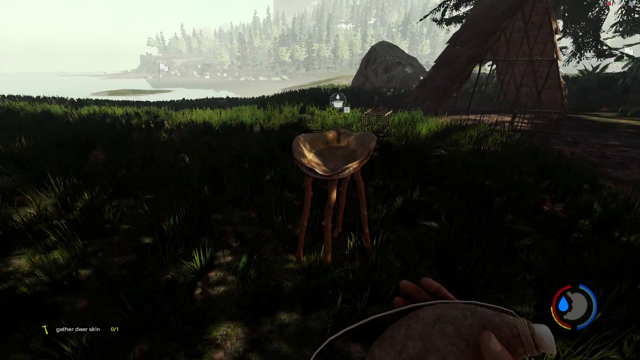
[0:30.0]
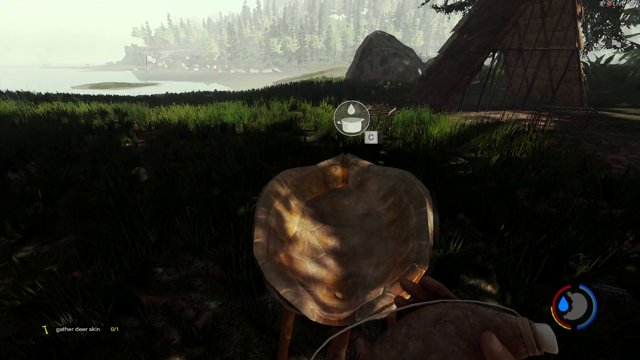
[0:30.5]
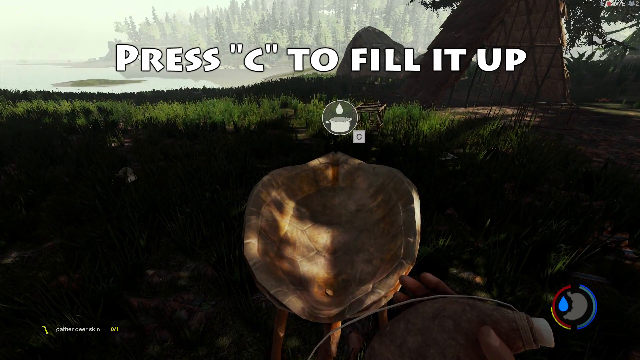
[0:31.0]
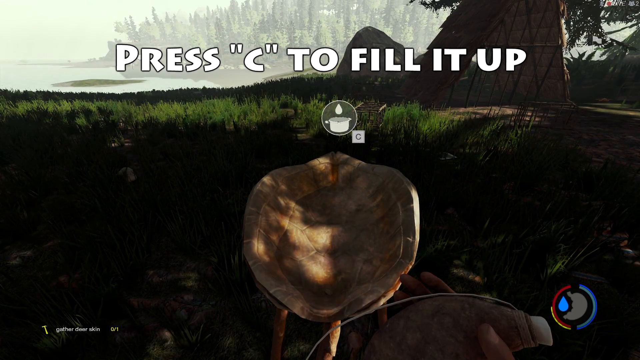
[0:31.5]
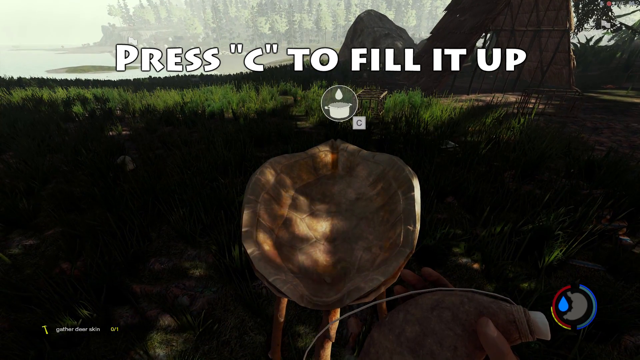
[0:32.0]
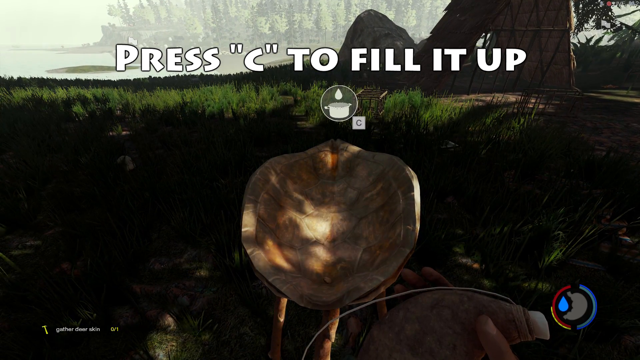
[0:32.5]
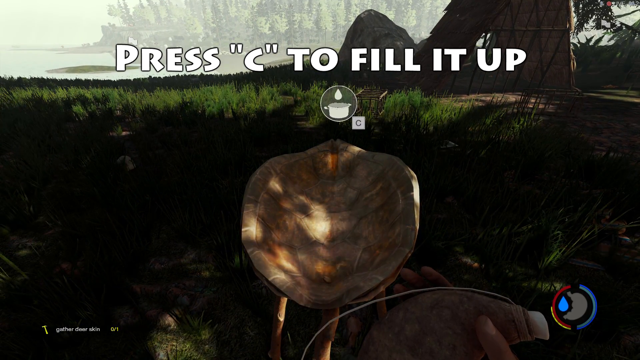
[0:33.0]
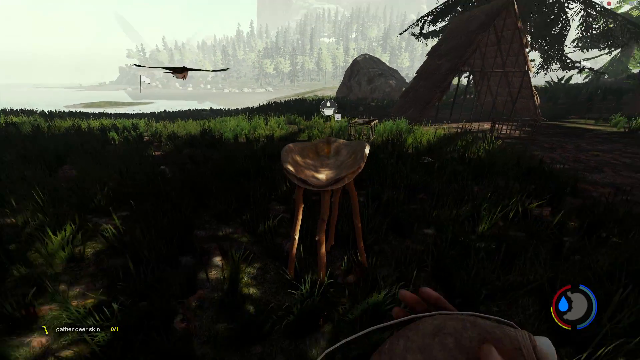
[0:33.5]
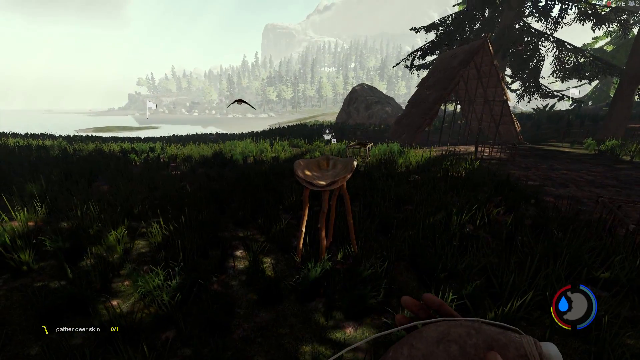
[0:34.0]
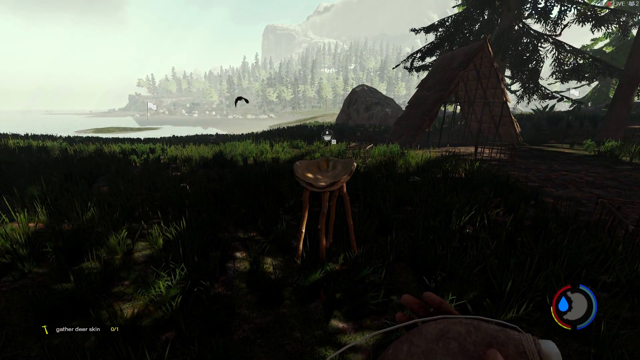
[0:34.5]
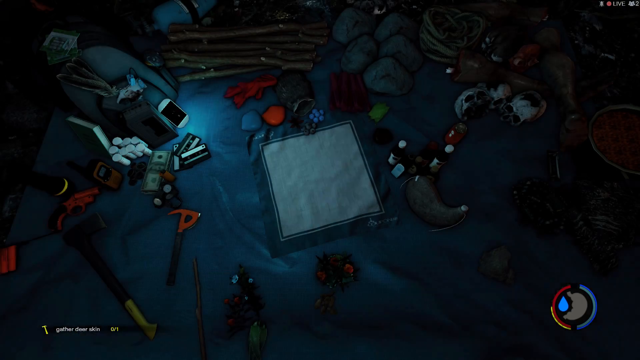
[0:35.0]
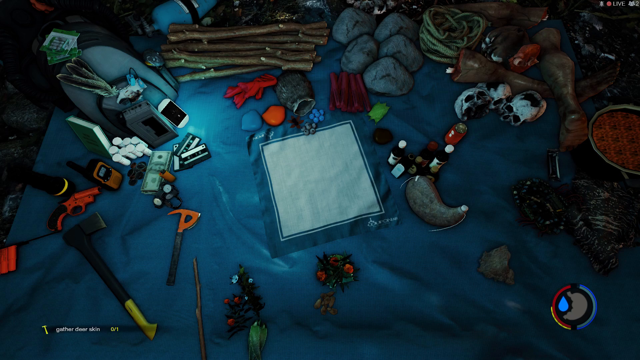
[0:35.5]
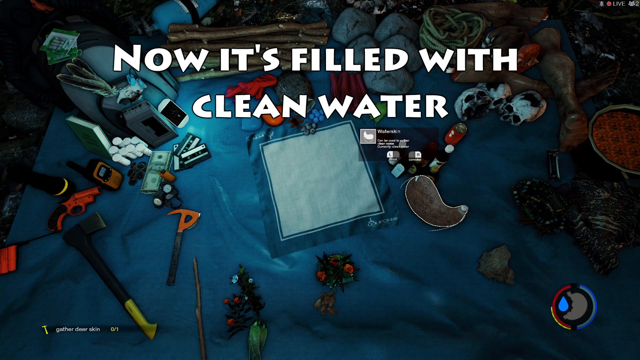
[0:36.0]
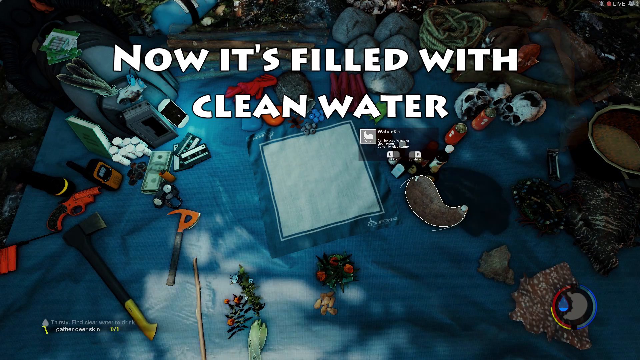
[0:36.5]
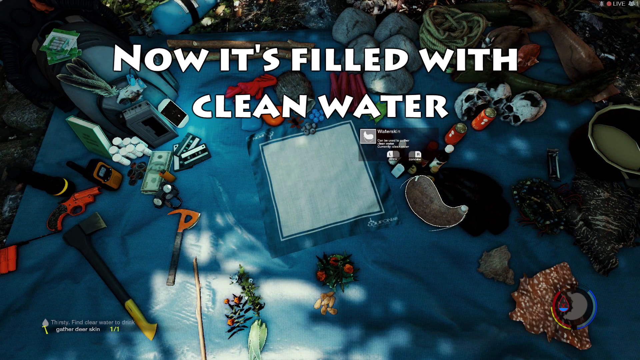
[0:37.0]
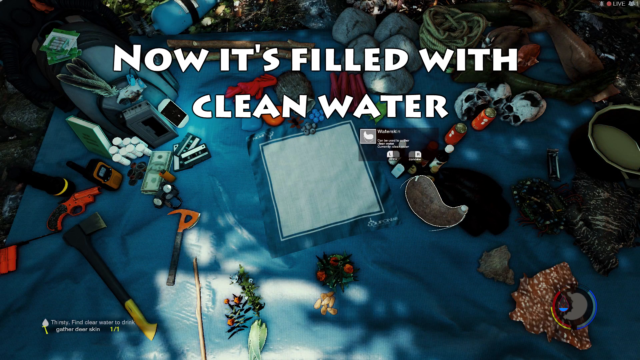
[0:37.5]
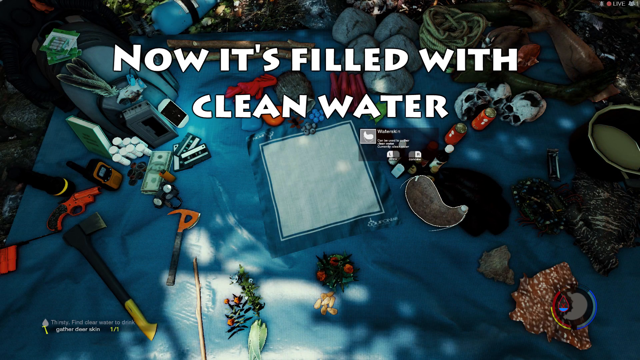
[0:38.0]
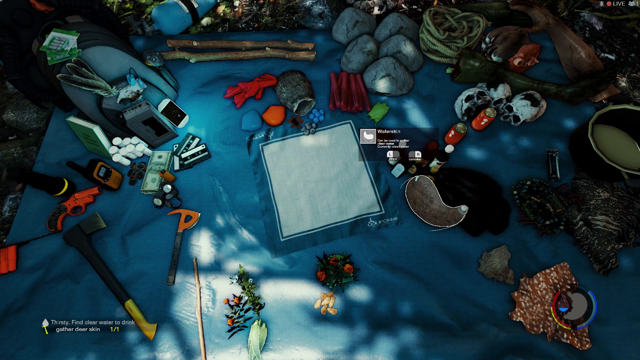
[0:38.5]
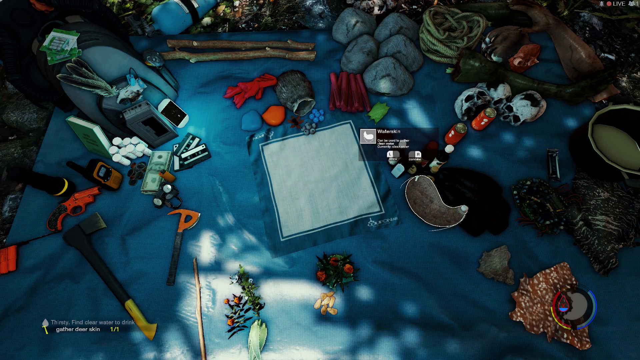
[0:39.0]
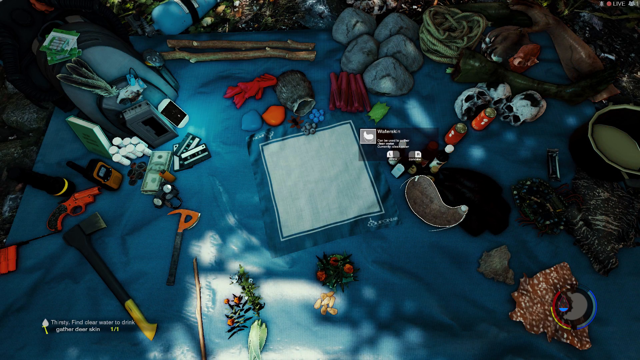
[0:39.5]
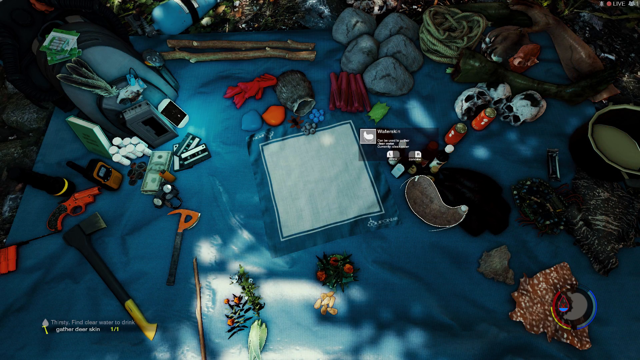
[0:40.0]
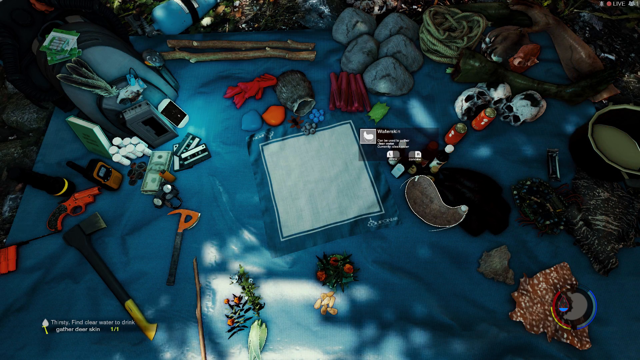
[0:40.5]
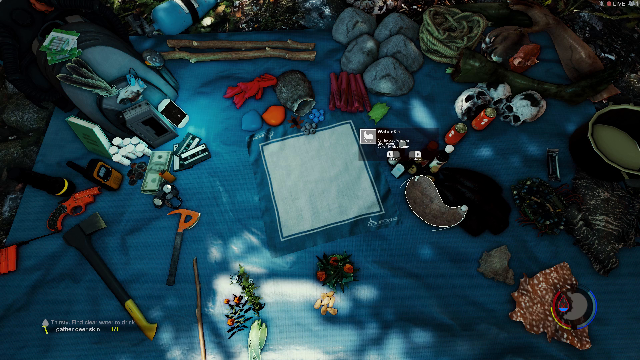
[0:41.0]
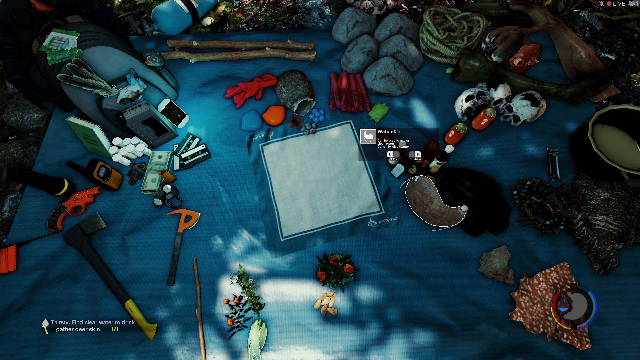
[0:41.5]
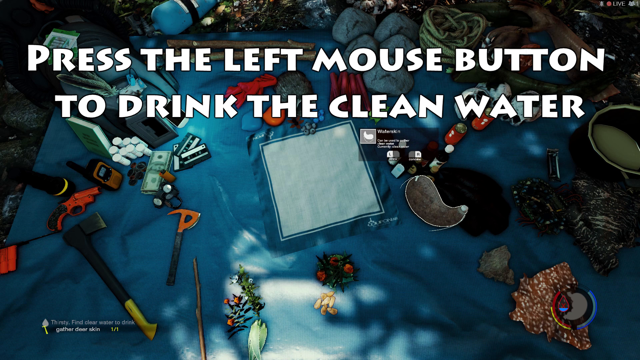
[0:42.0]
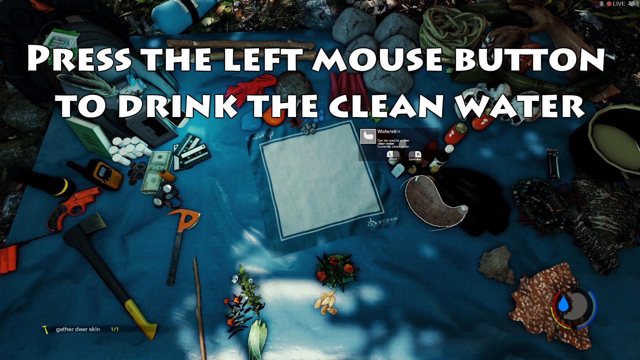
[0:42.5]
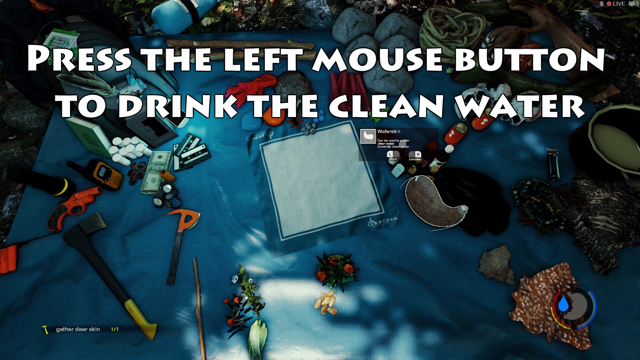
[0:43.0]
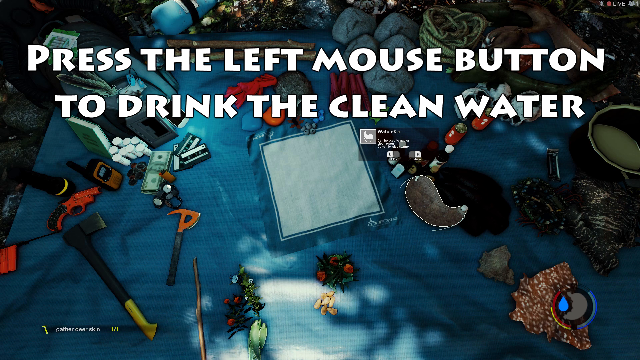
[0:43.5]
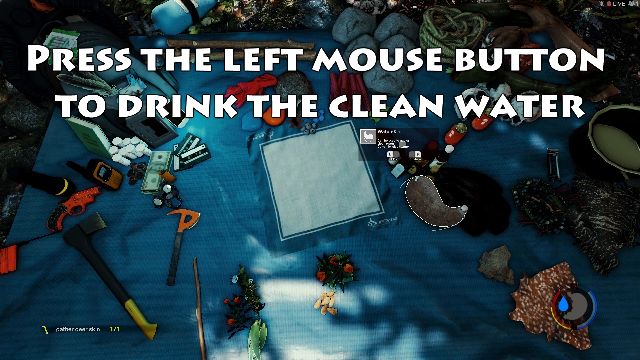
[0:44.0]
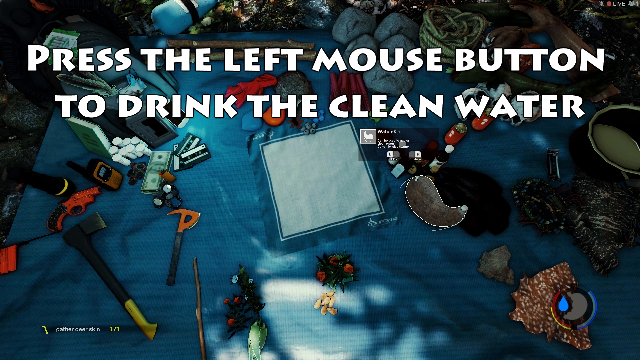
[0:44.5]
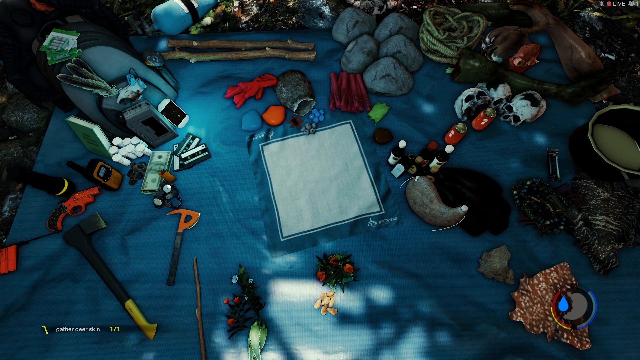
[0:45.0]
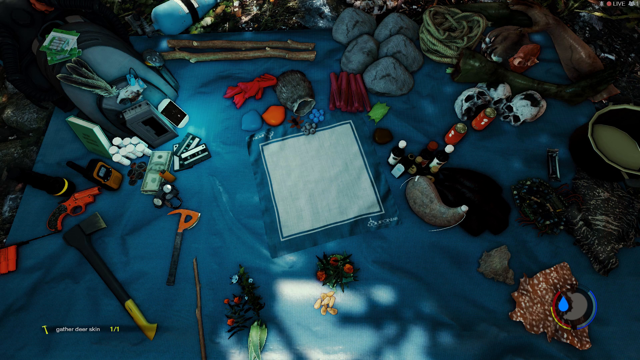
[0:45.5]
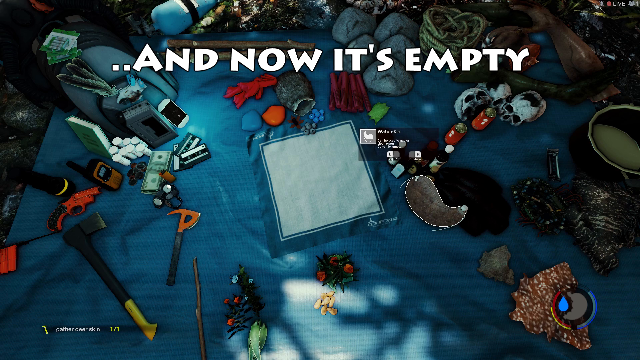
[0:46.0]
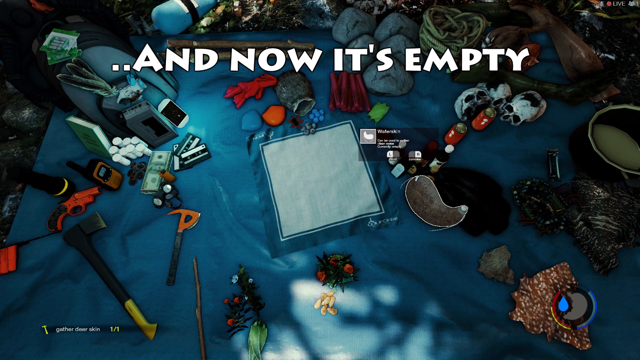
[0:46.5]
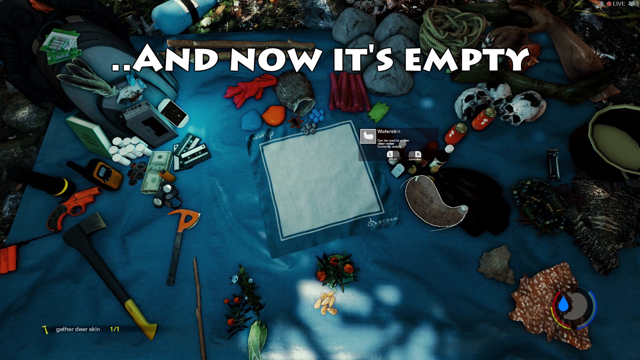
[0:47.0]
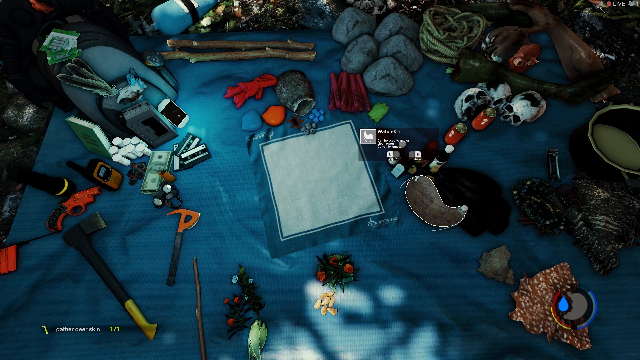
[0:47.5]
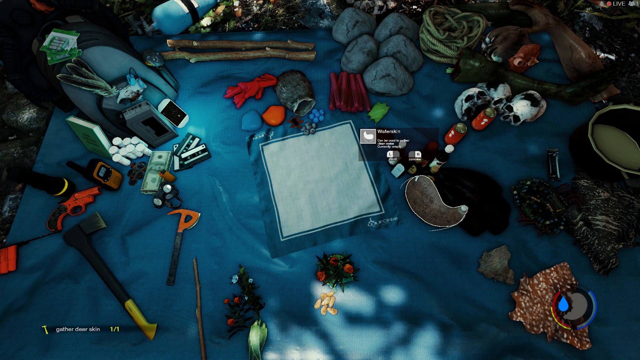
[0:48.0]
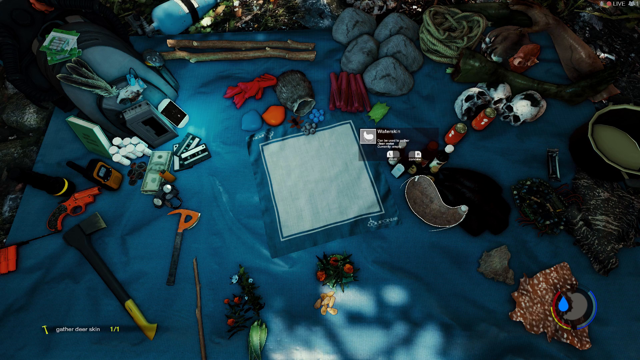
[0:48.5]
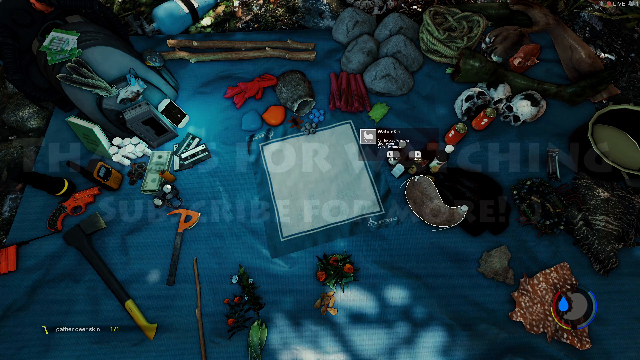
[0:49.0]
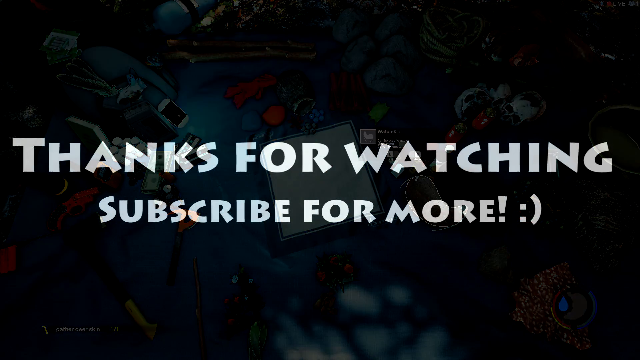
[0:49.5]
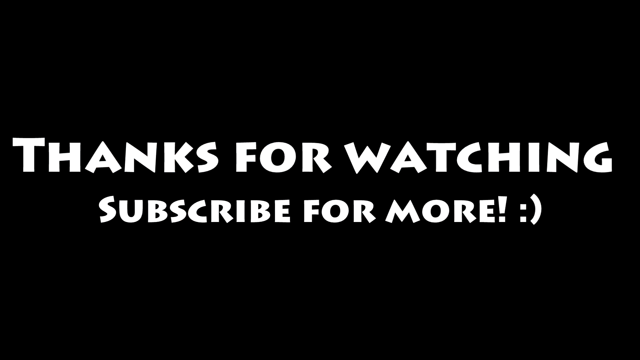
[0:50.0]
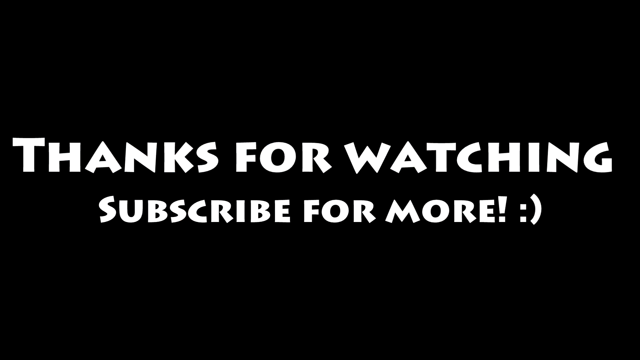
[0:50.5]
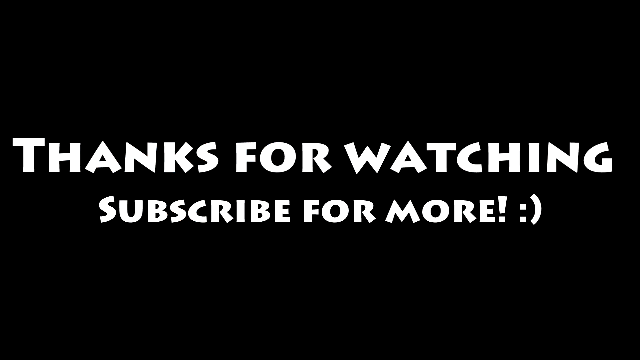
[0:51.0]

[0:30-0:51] The player approaches a chair on the opposite side of the water. The chair is made of a large tortoise shell, and a candle icon is on top of it. In the background is a large, vast landscape with mountains and large trees, and a larger body of water. What looks to be a small house or structure is near the tortoise chair. The screen then again shows the picture of the crowded desk, with a caption that reads "now it's filled with clean water. Press the left mouse button to drink the clean water." At the bottom of the screen is what looks to be an icon of the waterskin with a water droplet next to it. A pile of human skulls is on the back side of the table.